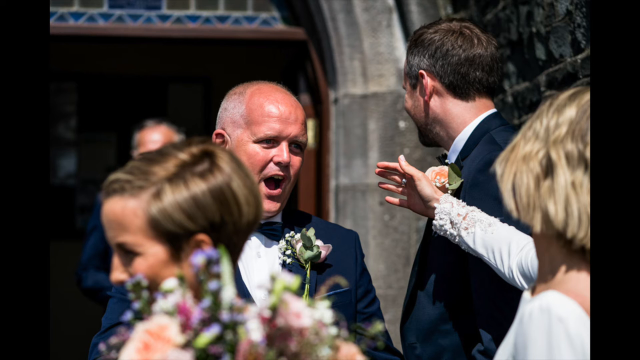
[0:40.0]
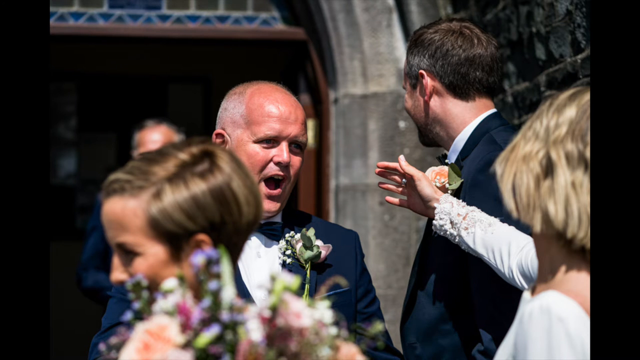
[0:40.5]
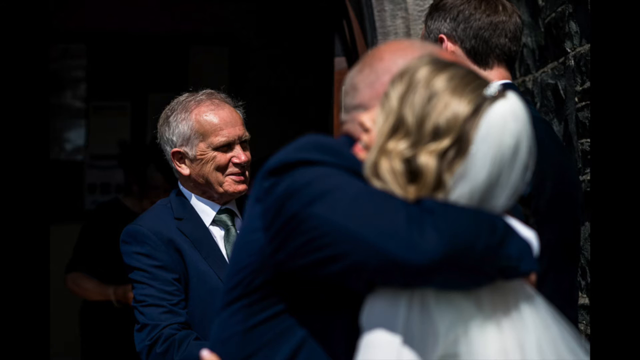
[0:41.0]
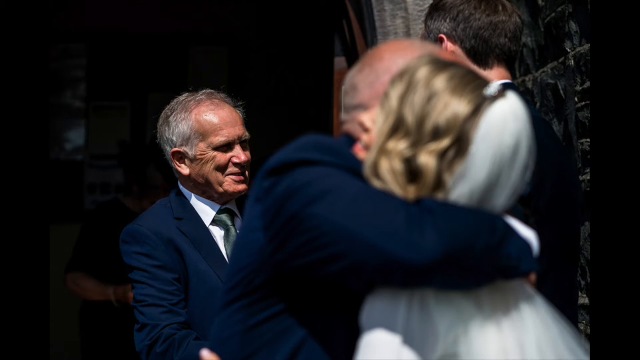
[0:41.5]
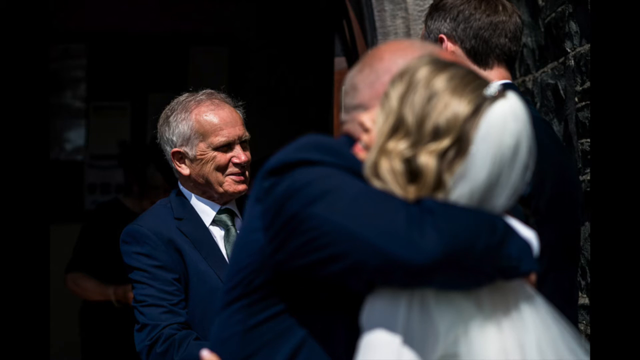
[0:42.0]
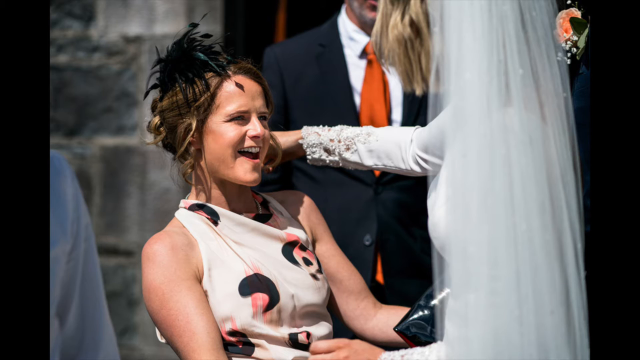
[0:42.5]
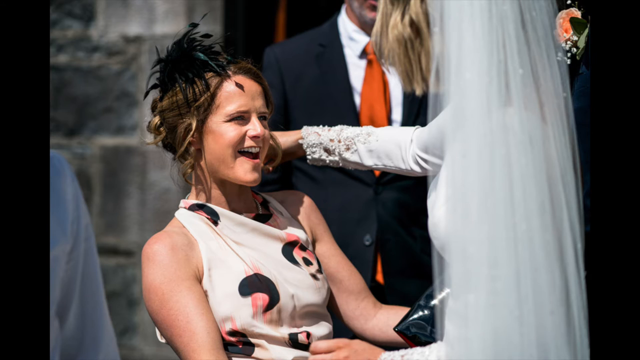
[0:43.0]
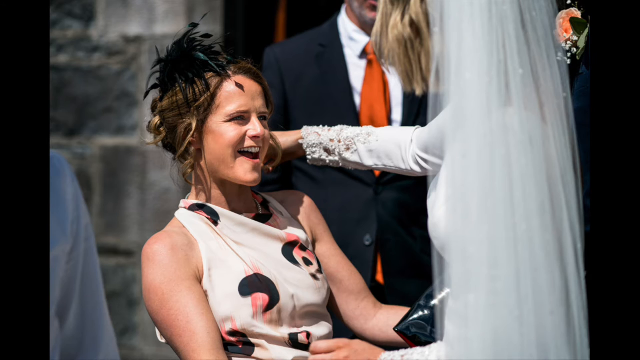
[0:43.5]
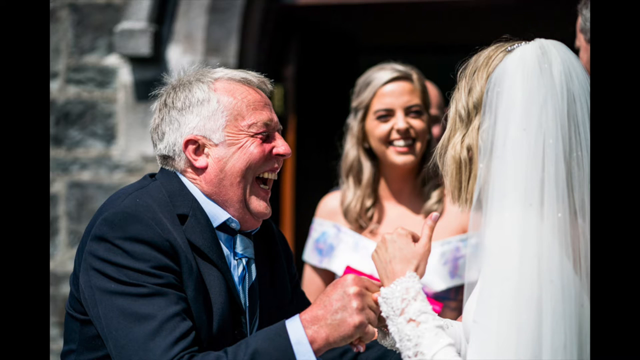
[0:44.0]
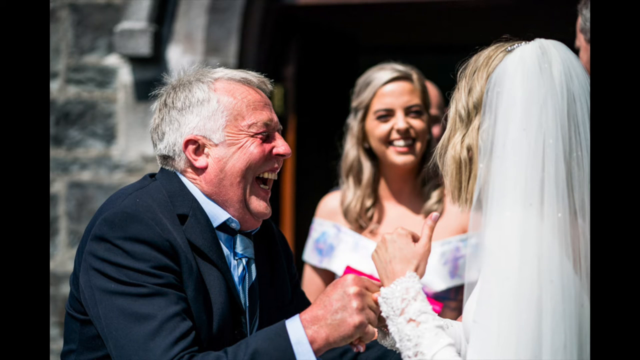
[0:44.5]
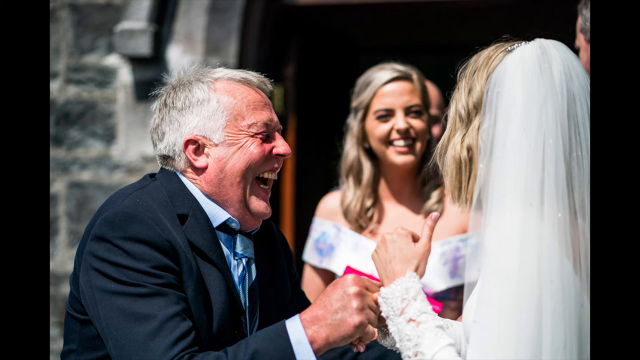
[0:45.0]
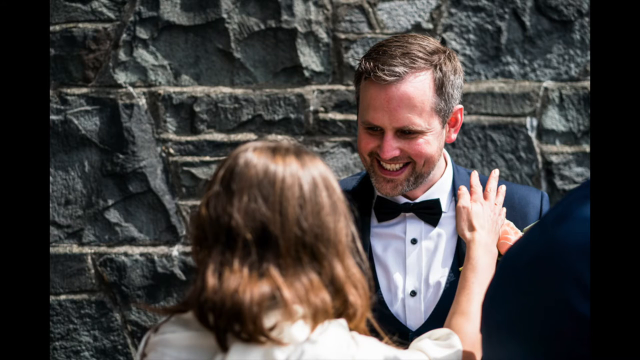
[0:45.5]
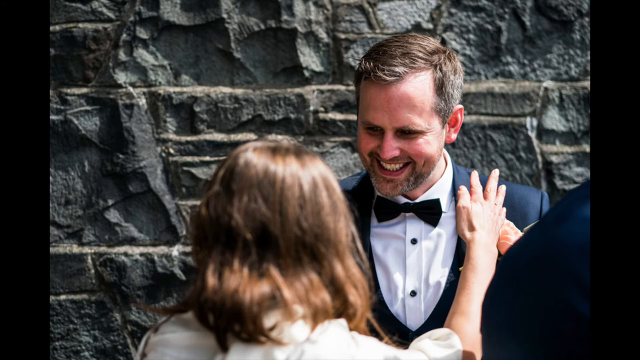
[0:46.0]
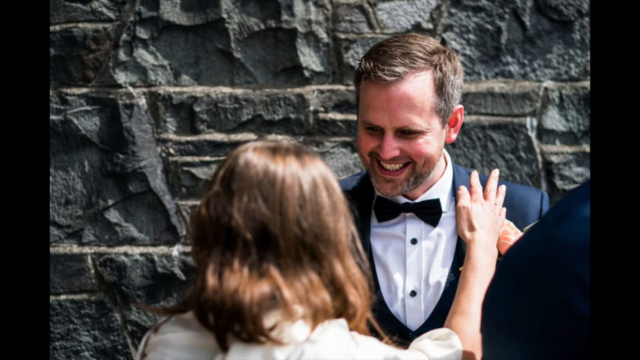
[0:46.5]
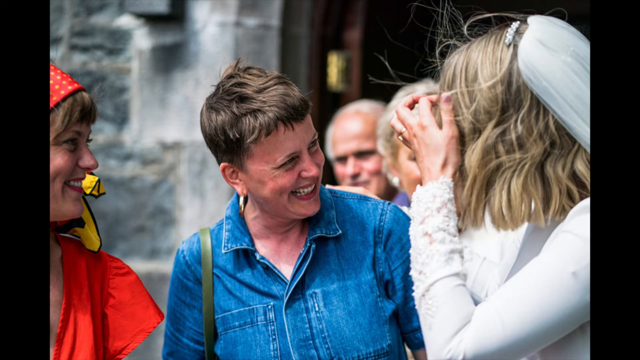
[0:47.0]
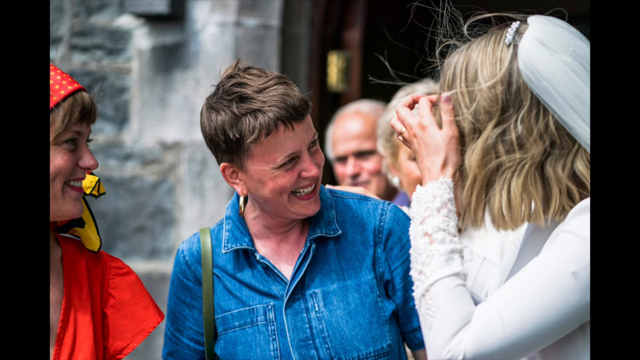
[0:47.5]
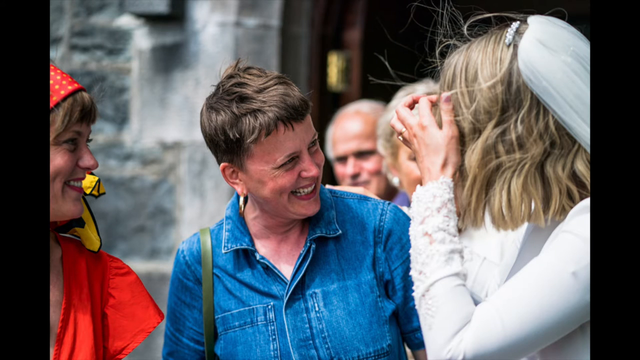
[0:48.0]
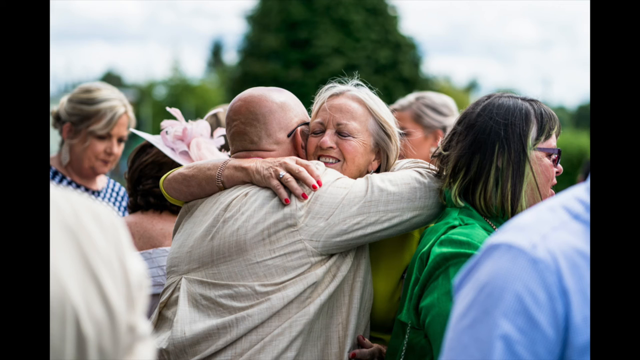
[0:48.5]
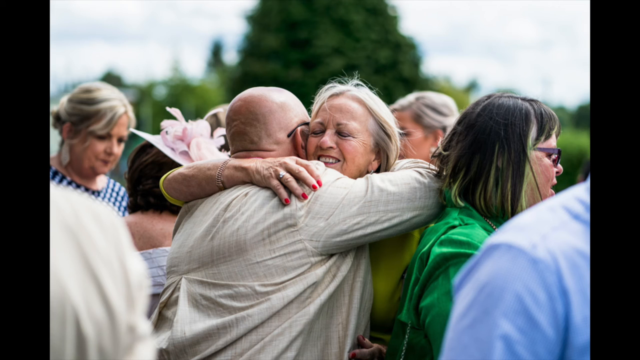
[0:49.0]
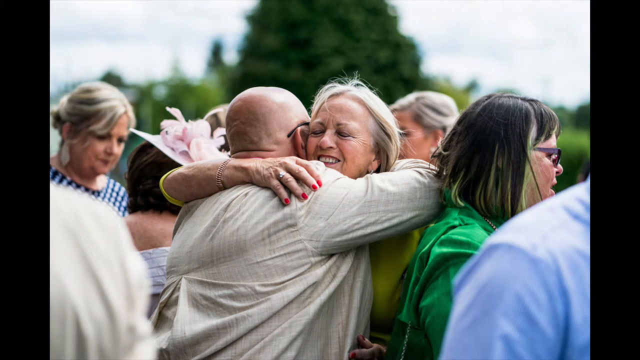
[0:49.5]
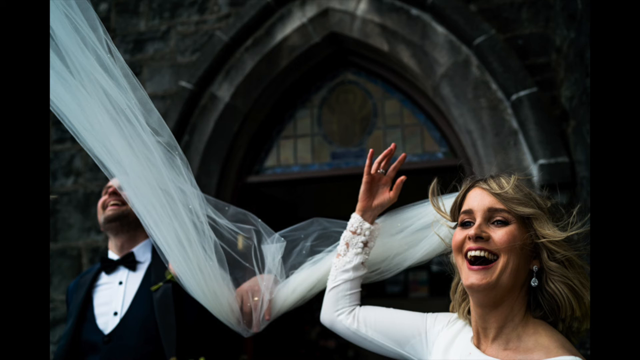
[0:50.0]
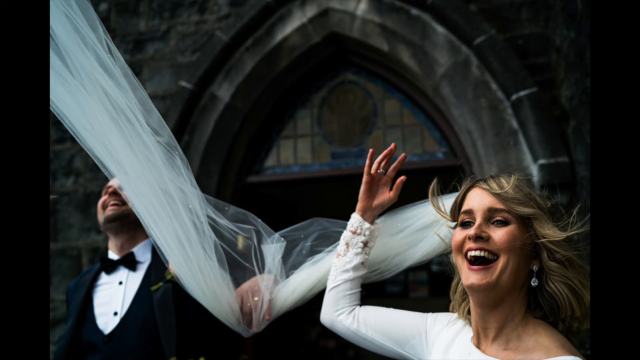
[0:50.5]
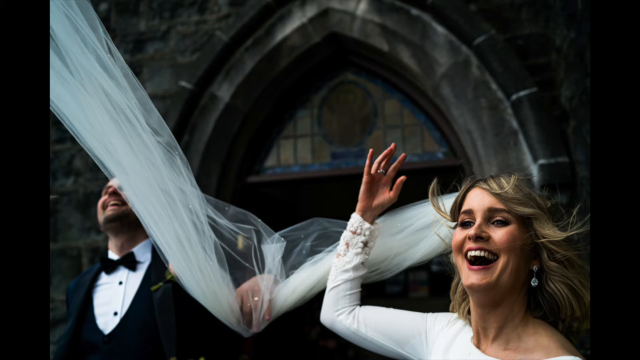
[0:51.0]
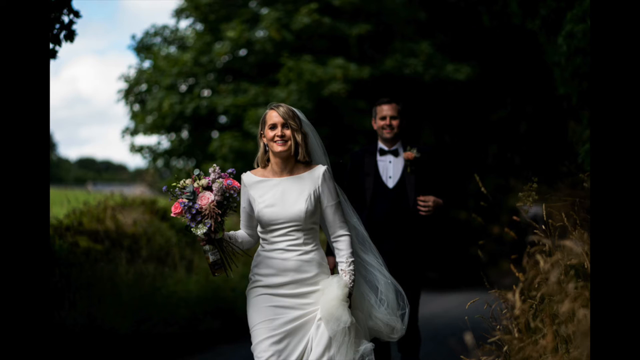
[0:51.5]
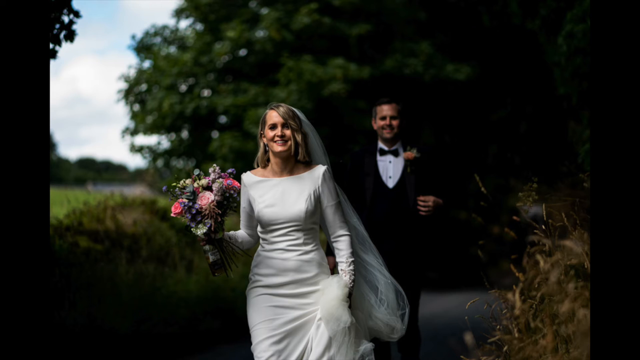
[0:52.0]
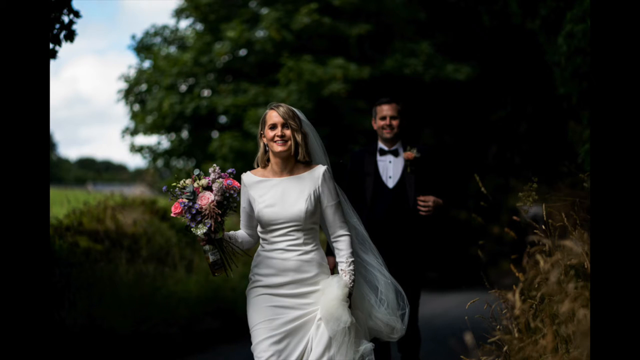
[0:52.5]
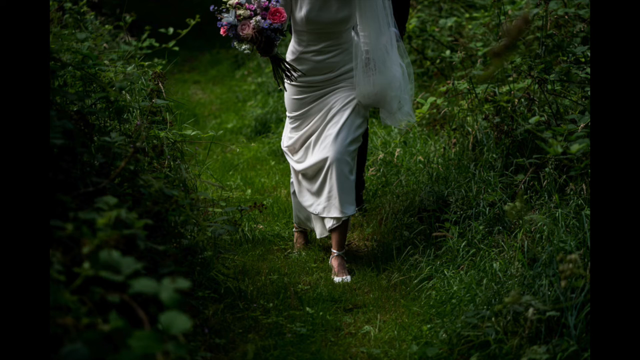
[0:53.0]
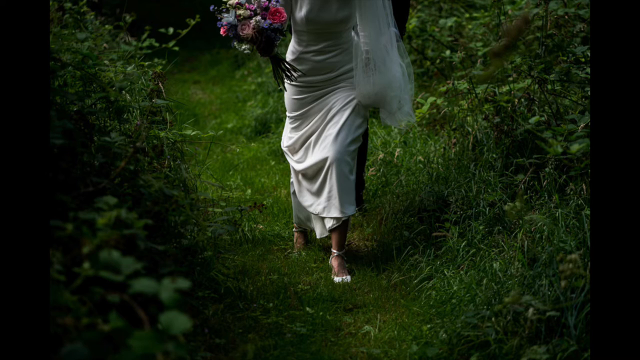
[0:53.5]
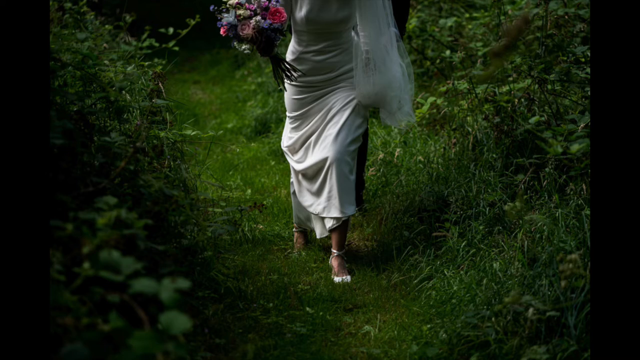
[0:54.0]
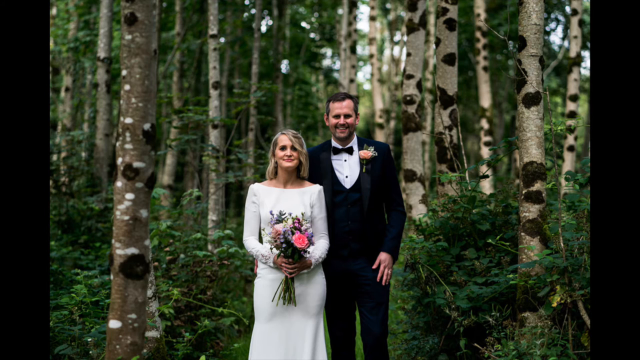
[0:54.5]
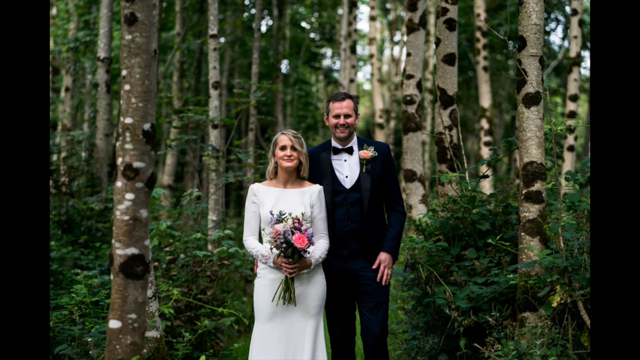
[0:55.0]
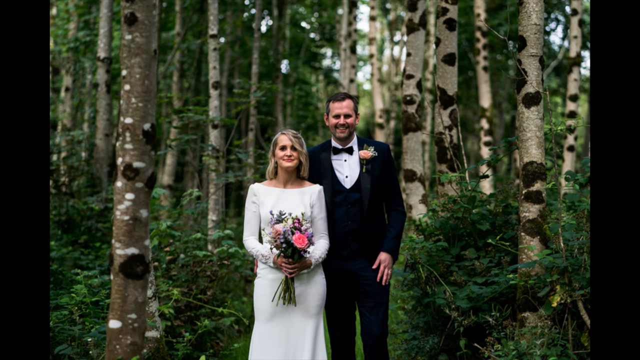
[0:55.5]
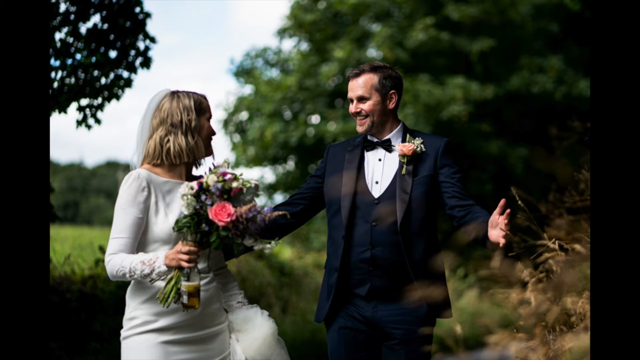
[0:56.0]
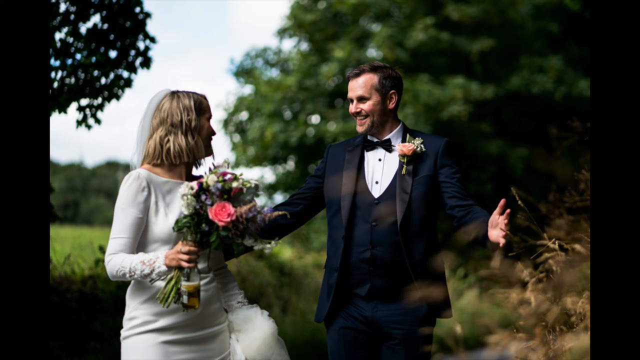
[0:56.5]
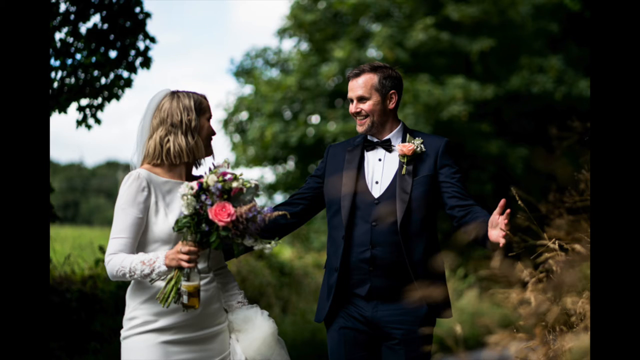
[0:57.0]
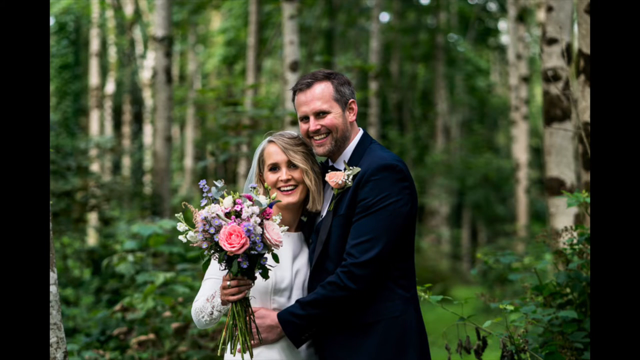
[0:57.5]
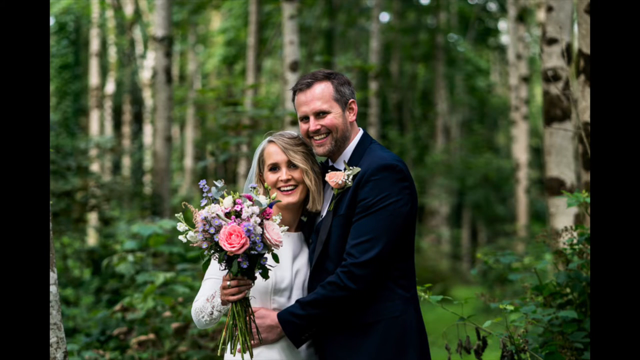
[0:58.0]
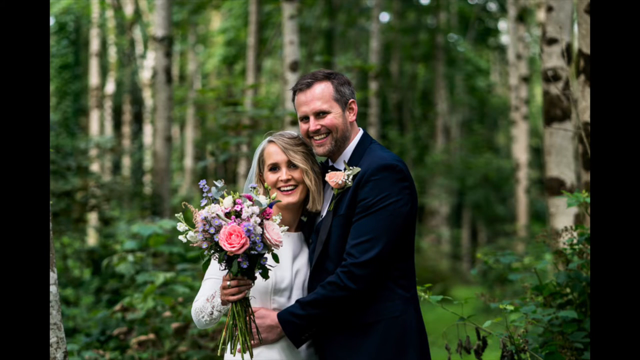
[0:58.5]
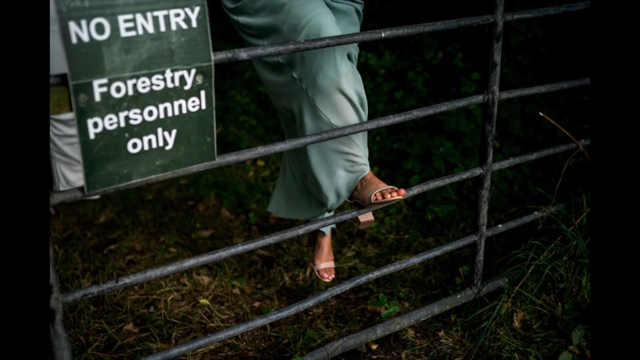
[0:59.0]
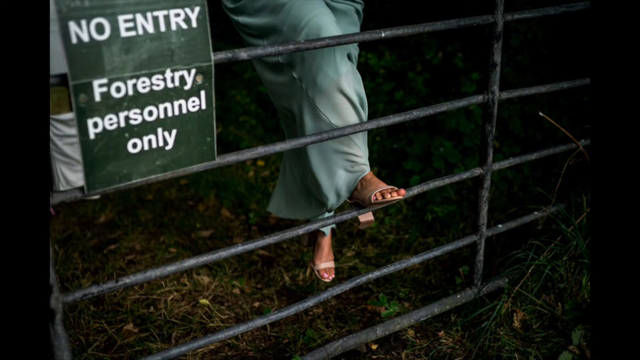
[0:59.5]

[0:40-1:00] On a sunny day, the father embraces his newly married daughter, another man exits the church doors, an ecstatic friend reaches for the bride, another man has a joyous expression, and the groom smiles at another woman. Everybody hugs and congratulates the bride. The bride and groom walk through a forested area, then pose side by side with the bouquet in her hands. The trees have light bark with white and brown spots. Candid shots show the couple hugging, laughing and looking at each other in the woods, including one where she steps on a gate that says "no entry". The wedding appears small and close-knit, in a small church with a simple ceremony and little decoration.